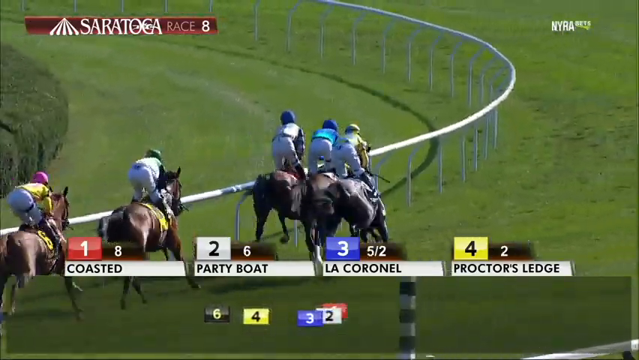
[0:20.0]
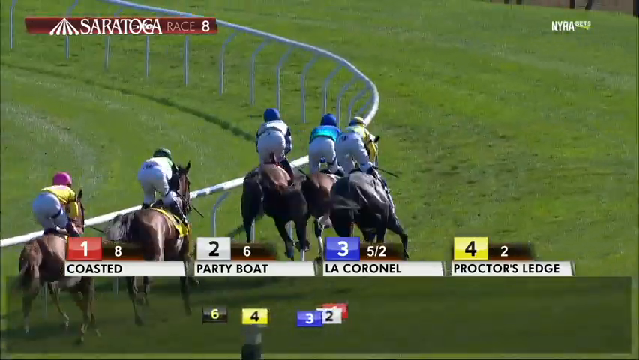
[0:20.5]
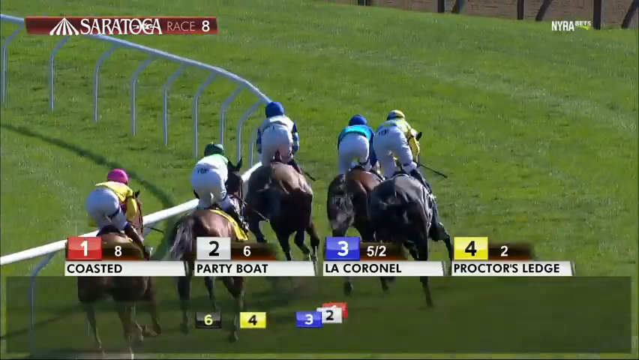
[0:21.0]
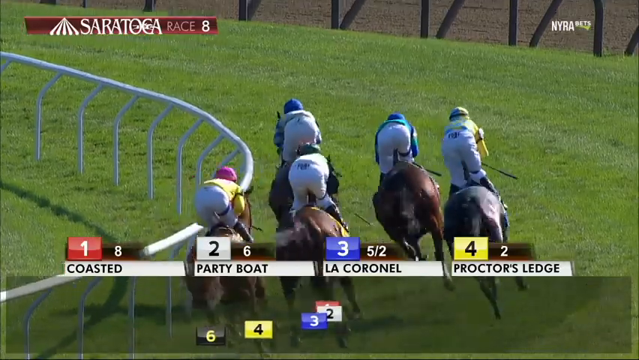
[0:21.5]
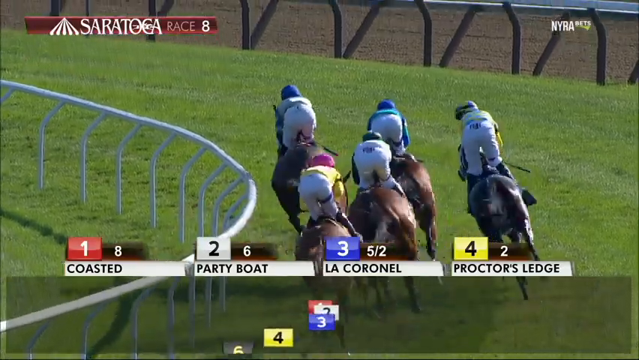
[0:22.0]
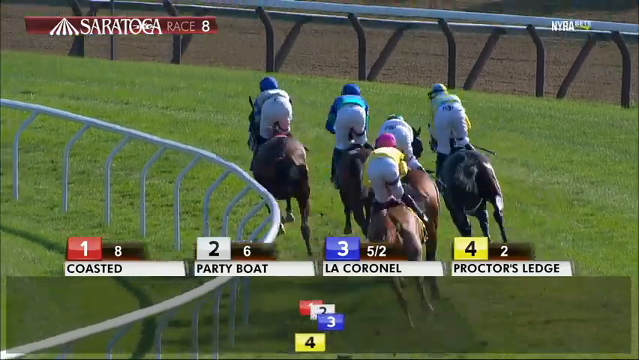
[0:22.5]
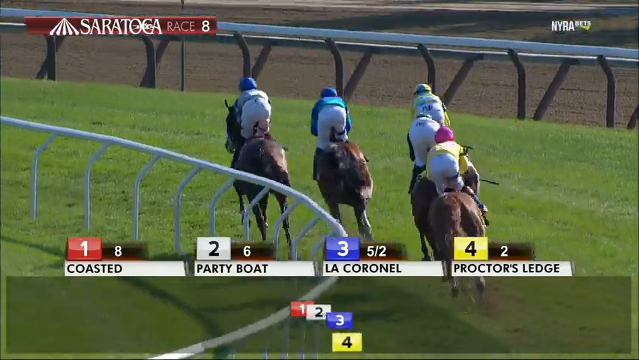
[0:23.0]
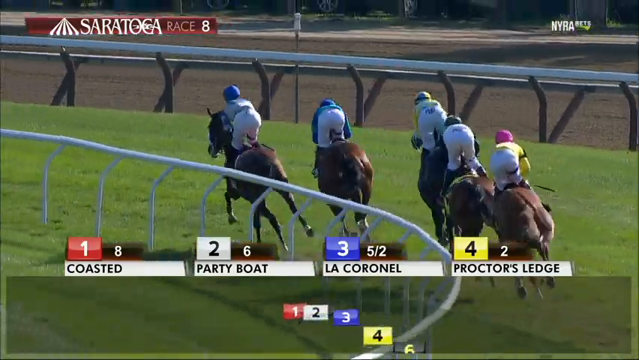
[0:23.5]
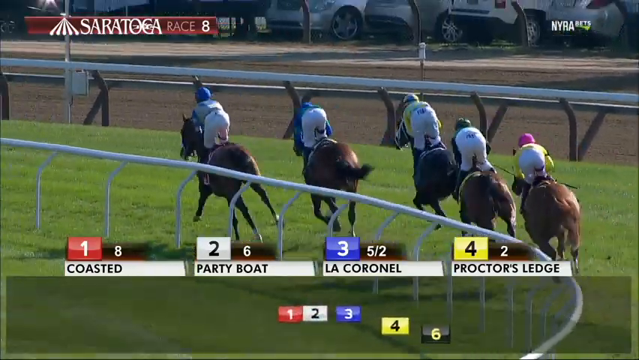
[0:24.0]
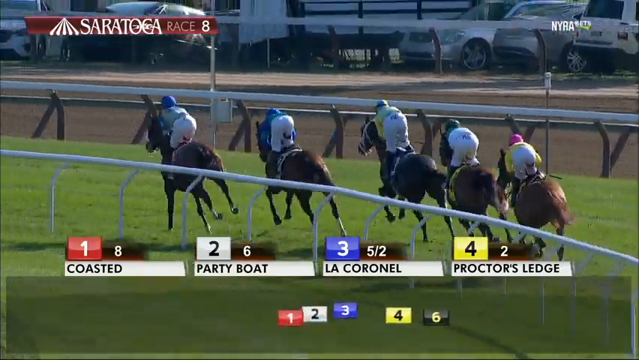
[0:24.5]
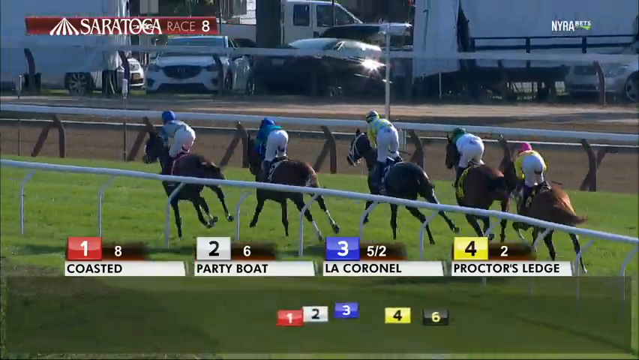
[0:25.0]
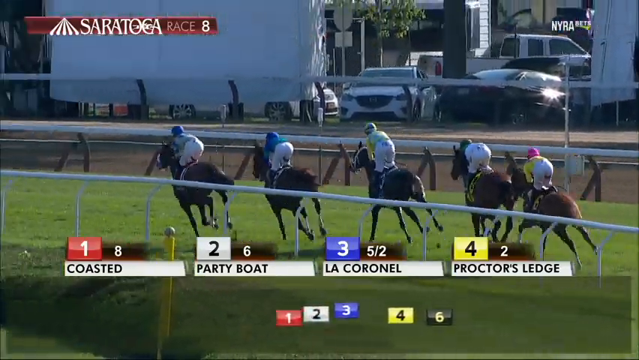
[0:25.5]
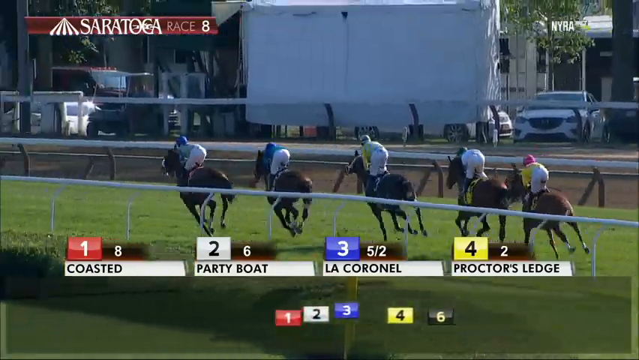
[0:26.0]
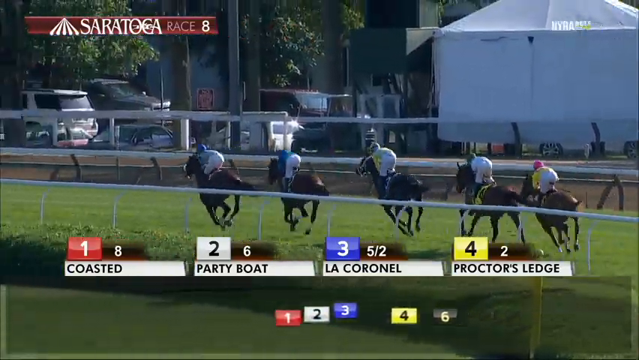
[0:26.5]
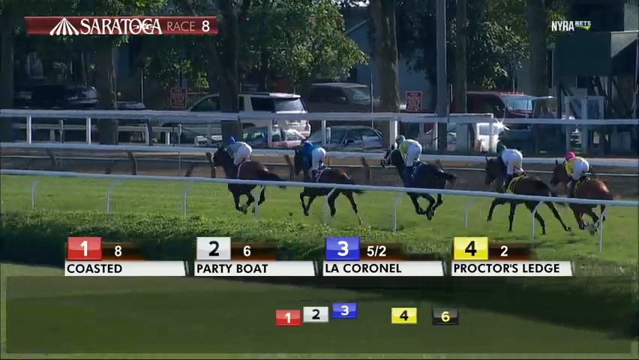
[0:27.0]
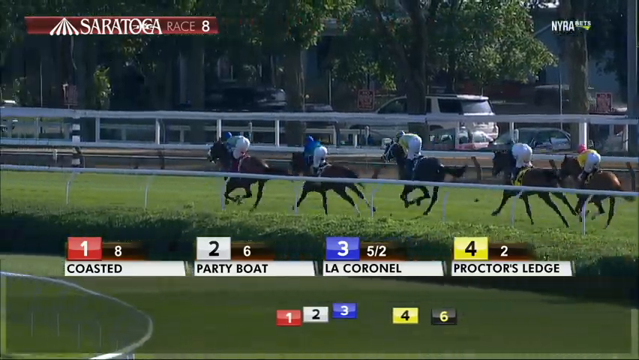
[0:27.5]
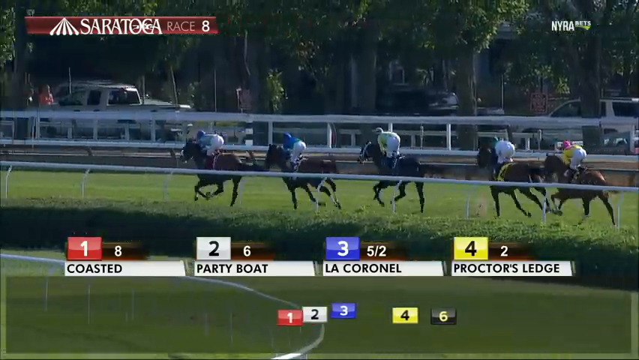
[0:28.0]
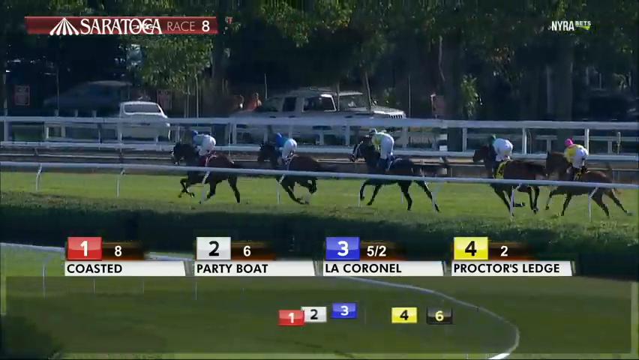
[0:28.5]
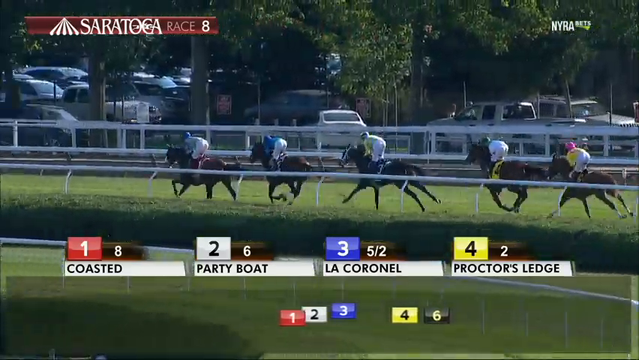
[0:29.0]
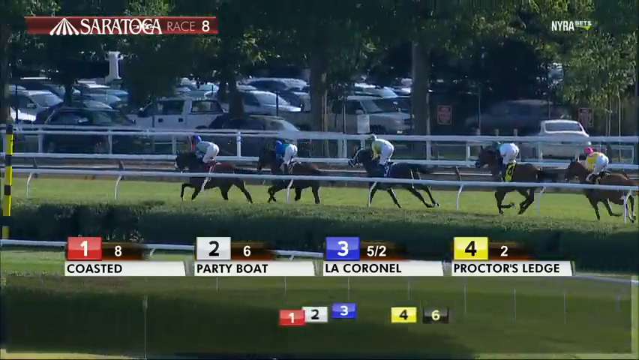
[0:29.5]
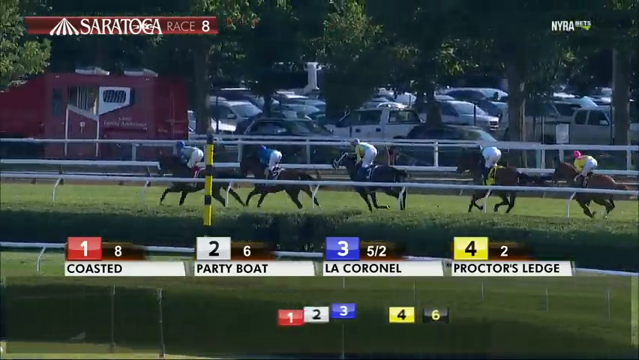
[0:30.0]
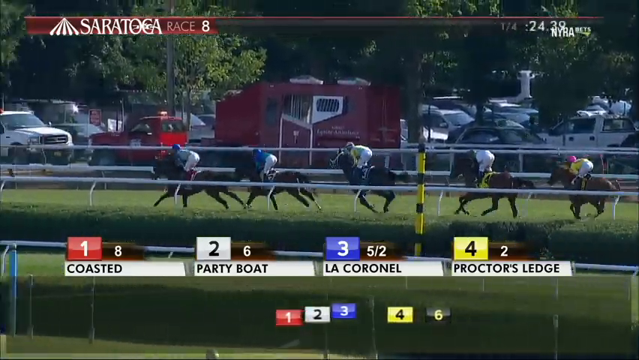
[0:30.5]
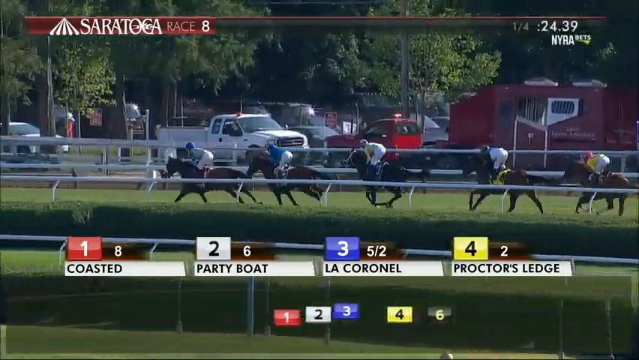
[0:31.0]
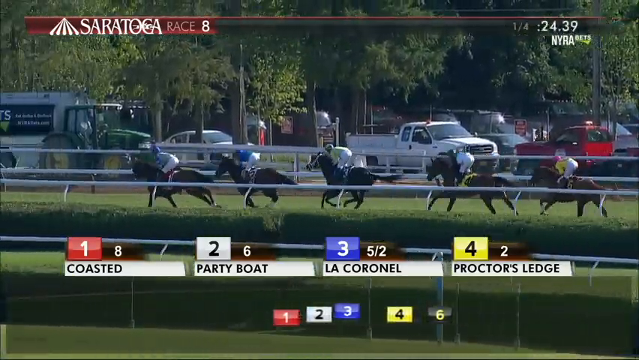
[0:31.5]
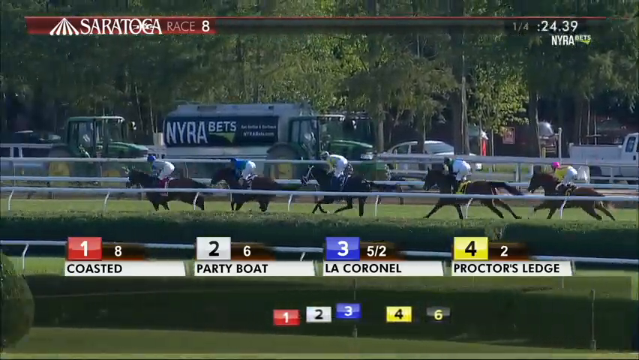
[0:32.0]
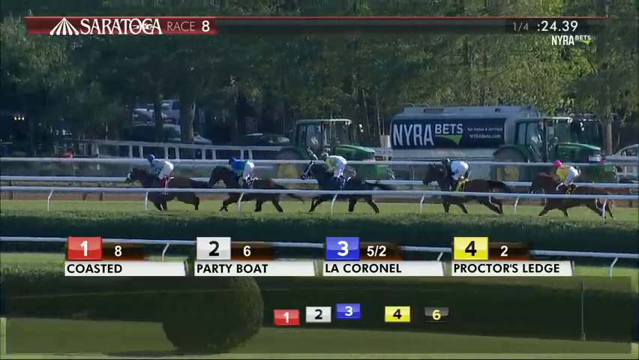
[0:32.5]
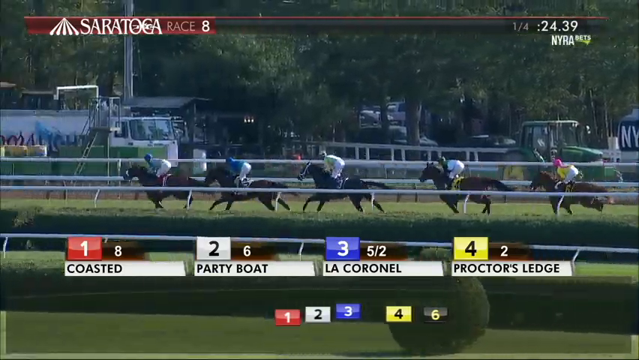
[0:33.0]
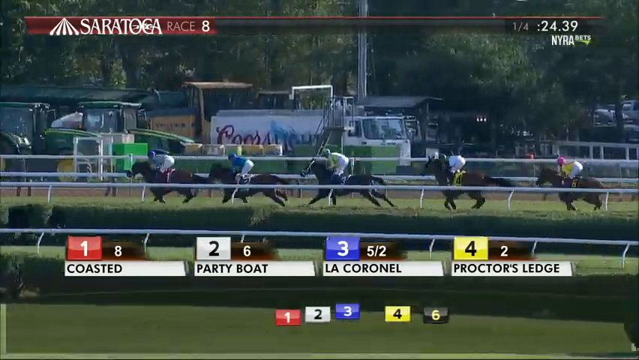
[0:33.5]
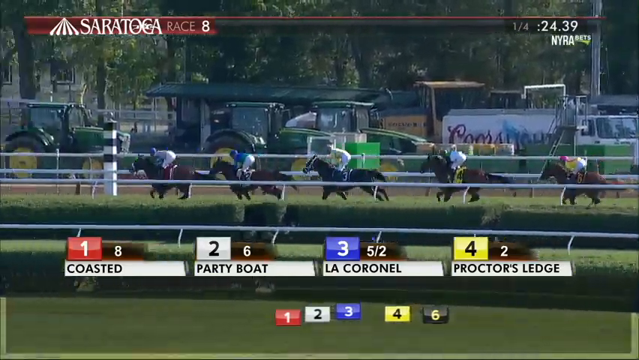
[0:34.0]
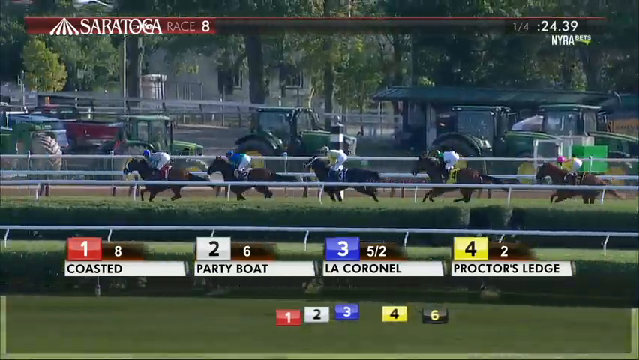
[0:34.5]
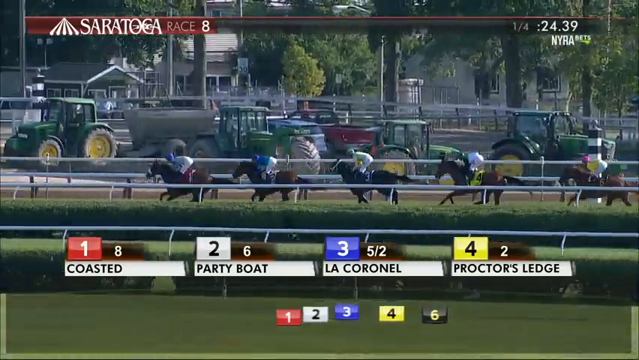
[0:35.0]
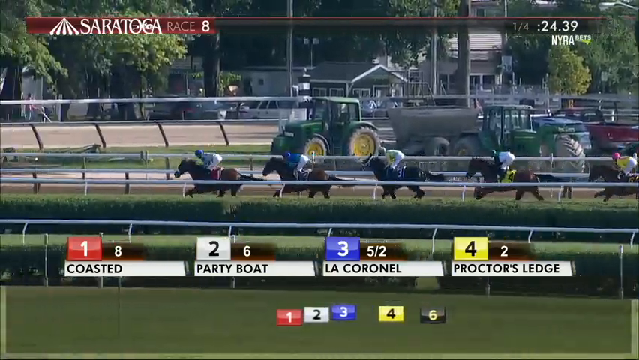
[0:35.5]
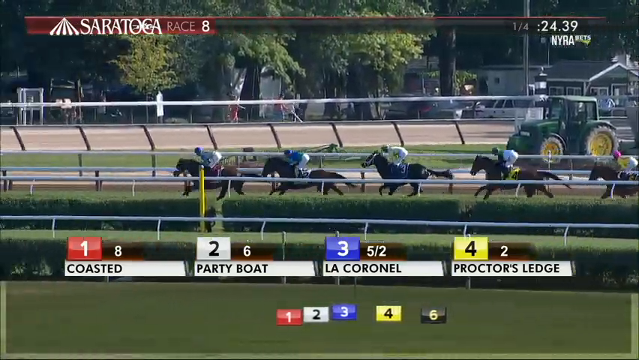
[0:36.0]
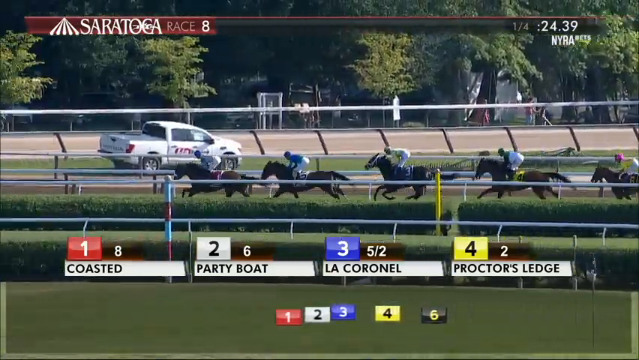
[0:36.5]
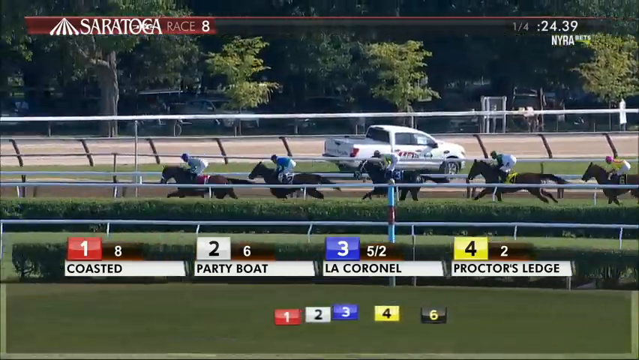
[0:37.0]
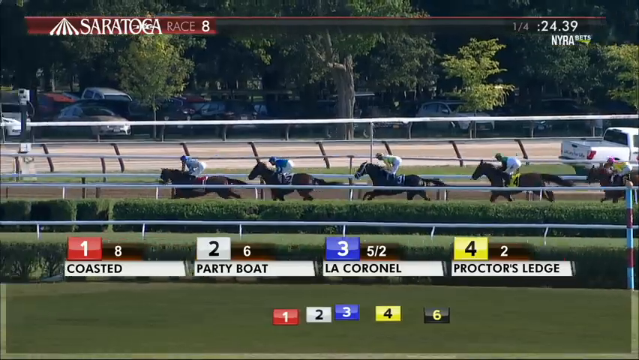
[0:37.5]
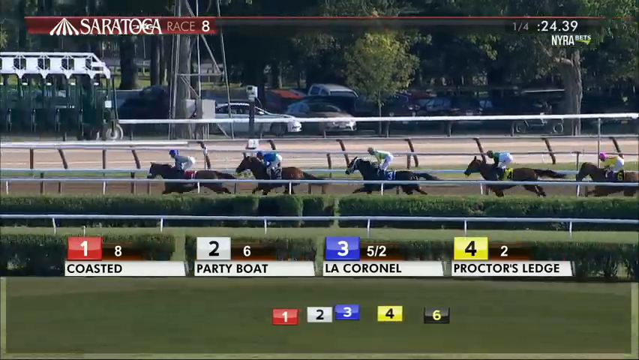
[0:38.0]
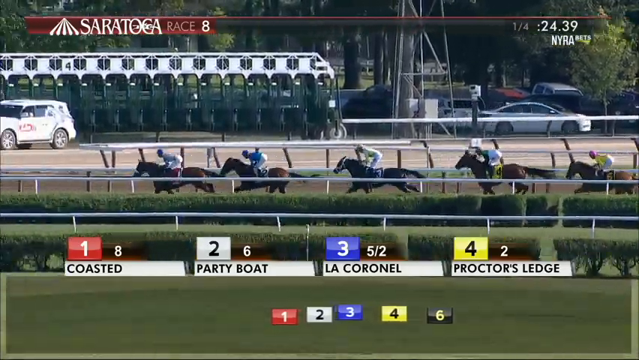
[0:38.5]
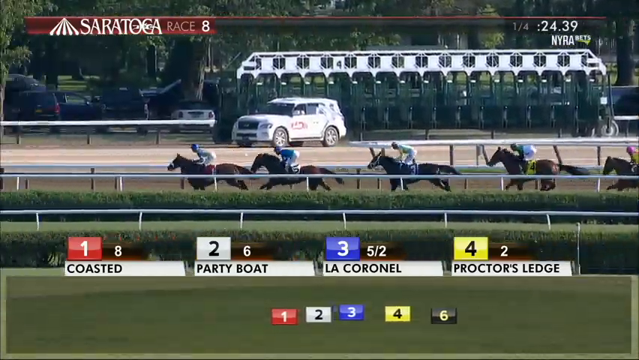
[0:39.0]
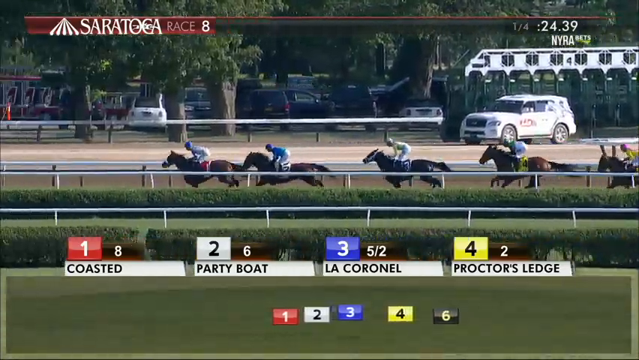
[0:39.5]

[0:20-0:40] The horses approach the first curve, turning left, as the camera looks from behind them. A logo in the upper left-hand corner reads "Saratoga race number eight" as the horses speed away. They make the turn and reach the other end of the track. The field is pretty close, though one horse has roughly a one-horse lead over second place, and all the horses are still within the screen. Another logo in the upper right-hand corner has small white text with the letters "NYRA". At the bottom of the screen, the horses' numbers and colors are lined up in order of position, and horse number one appears to have a slight lead over the rest.